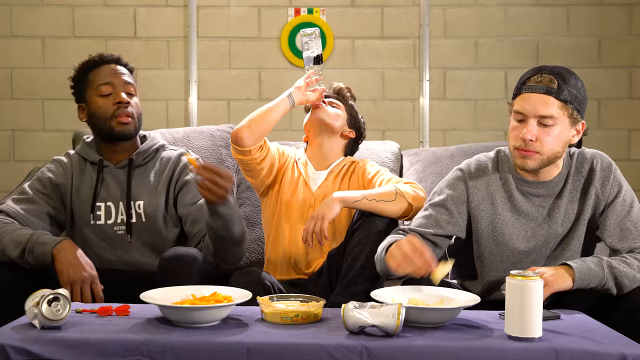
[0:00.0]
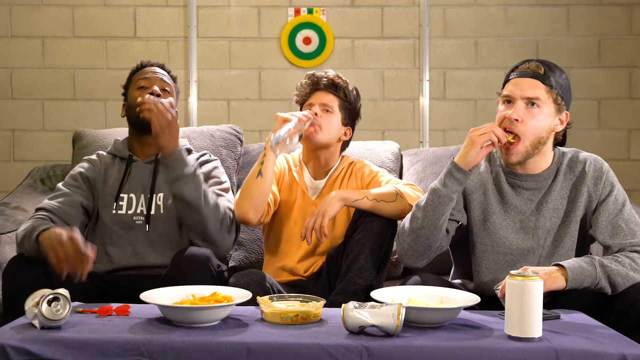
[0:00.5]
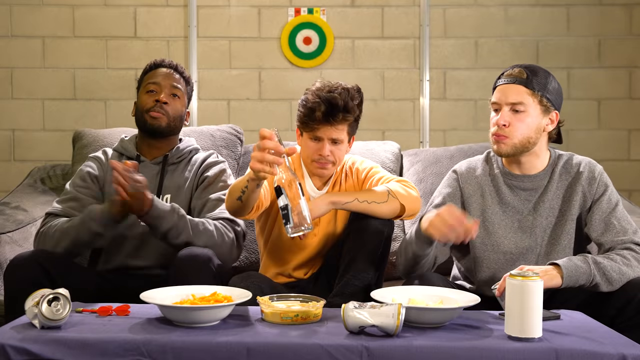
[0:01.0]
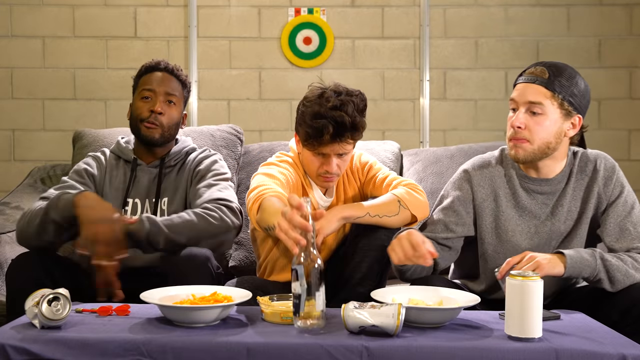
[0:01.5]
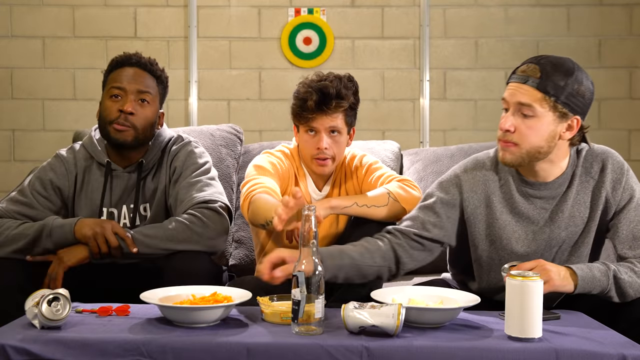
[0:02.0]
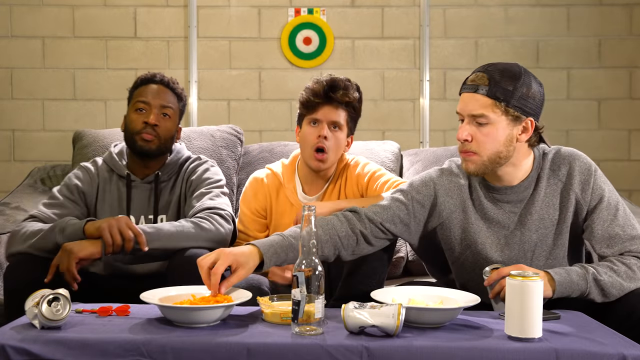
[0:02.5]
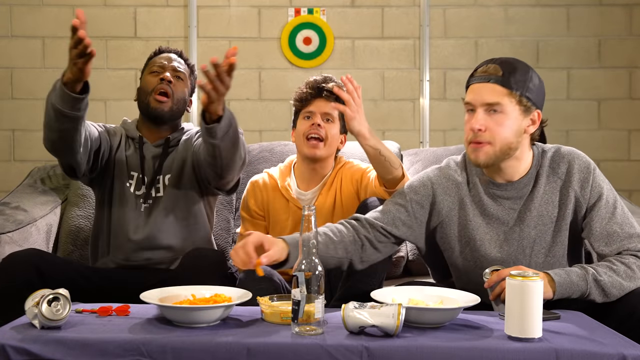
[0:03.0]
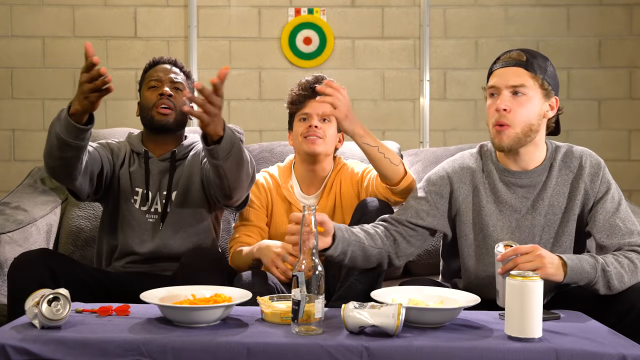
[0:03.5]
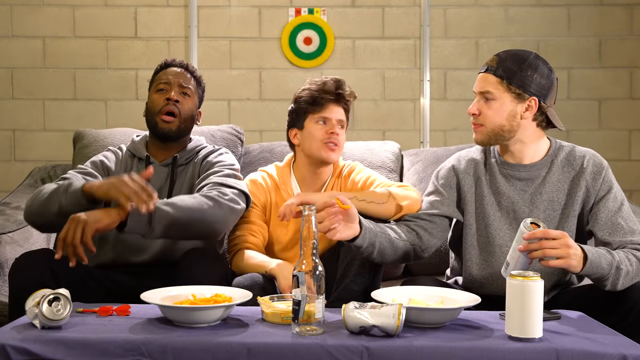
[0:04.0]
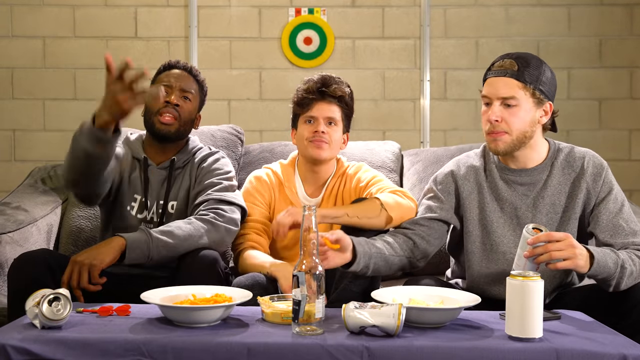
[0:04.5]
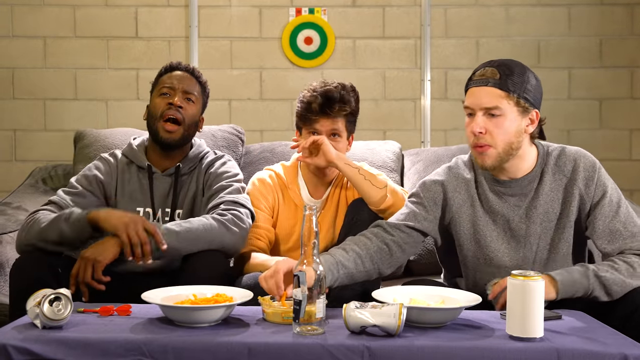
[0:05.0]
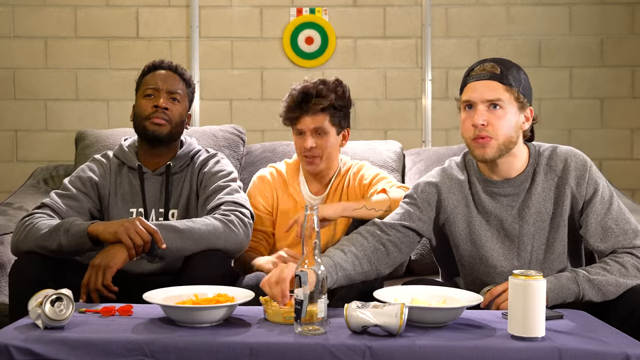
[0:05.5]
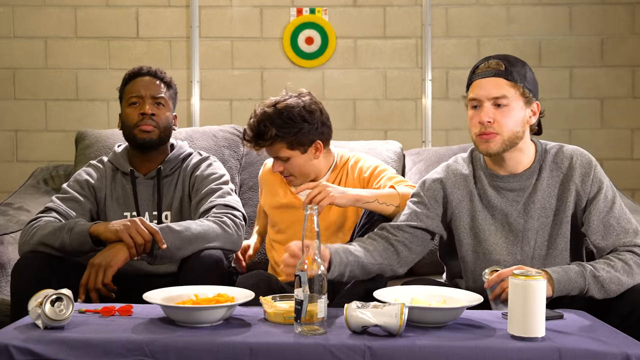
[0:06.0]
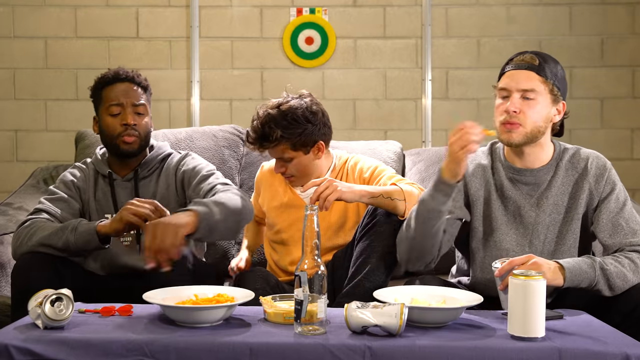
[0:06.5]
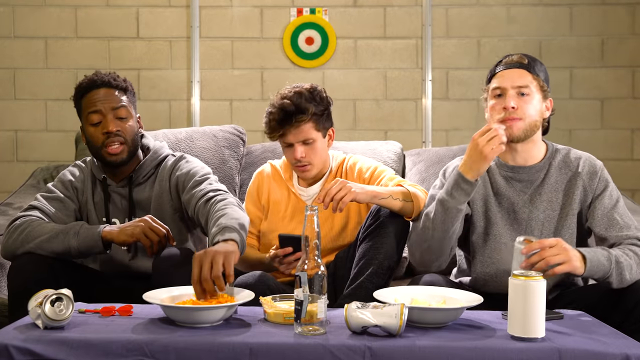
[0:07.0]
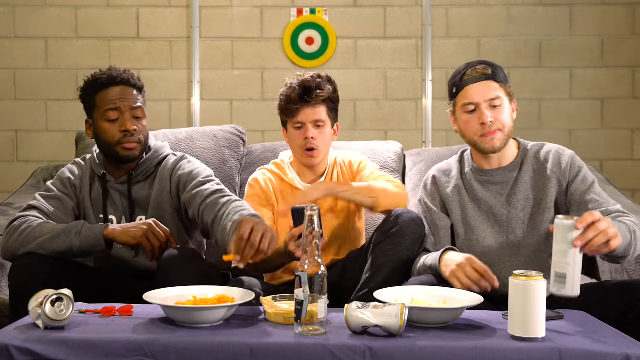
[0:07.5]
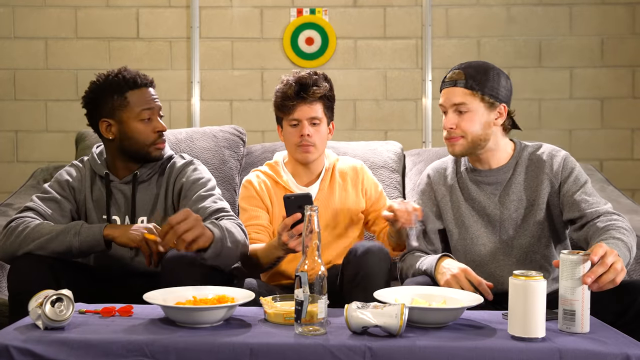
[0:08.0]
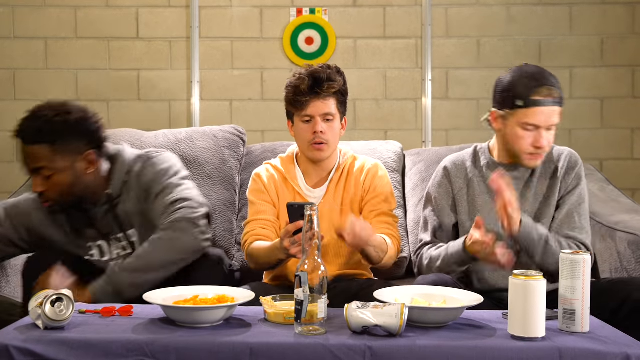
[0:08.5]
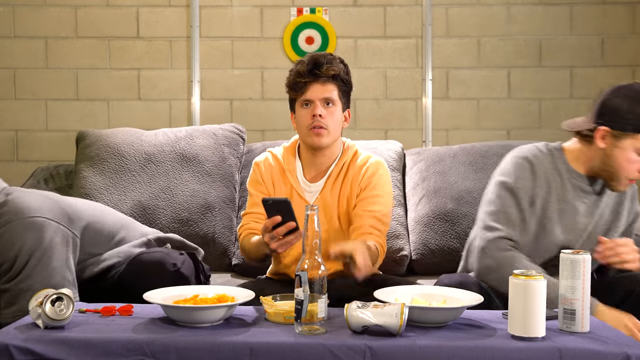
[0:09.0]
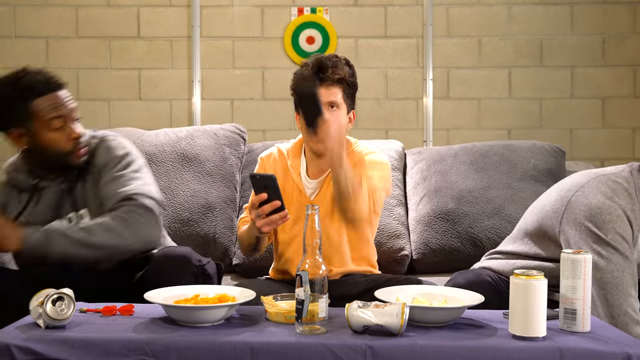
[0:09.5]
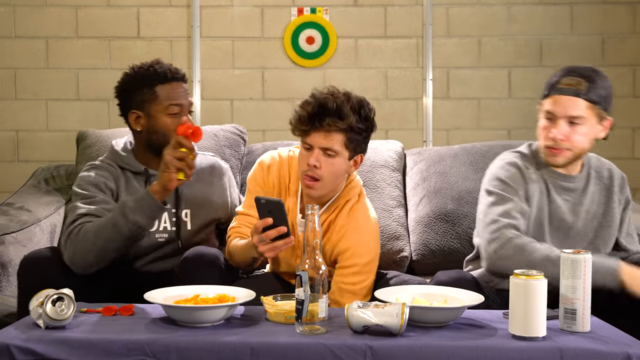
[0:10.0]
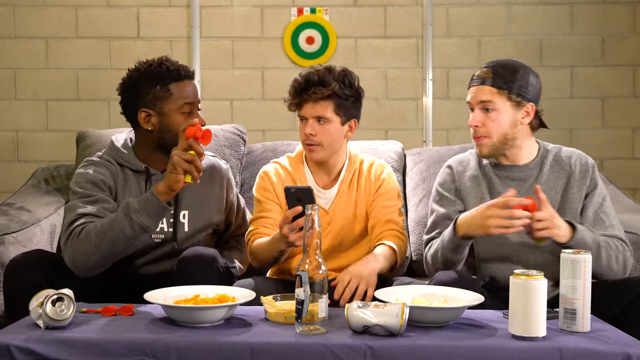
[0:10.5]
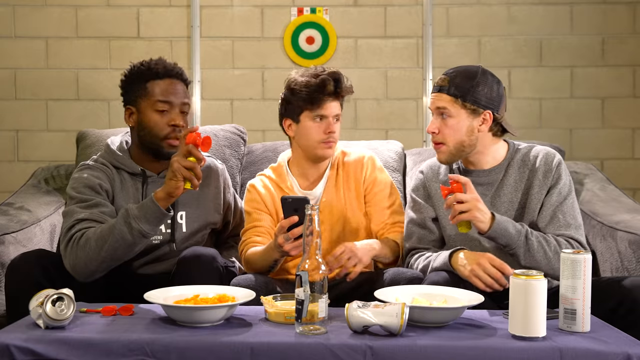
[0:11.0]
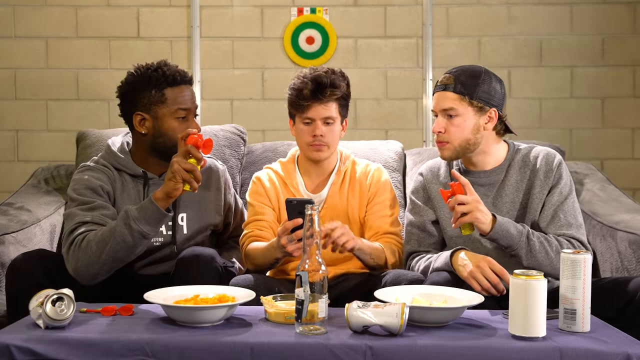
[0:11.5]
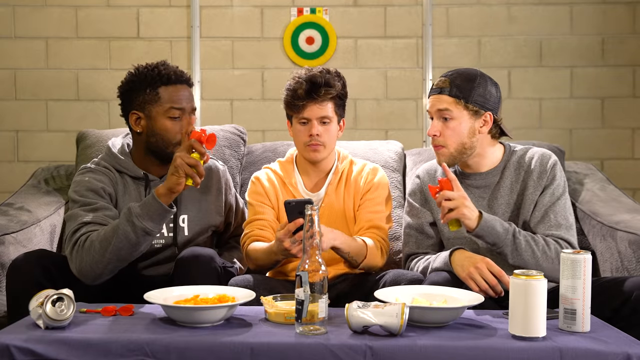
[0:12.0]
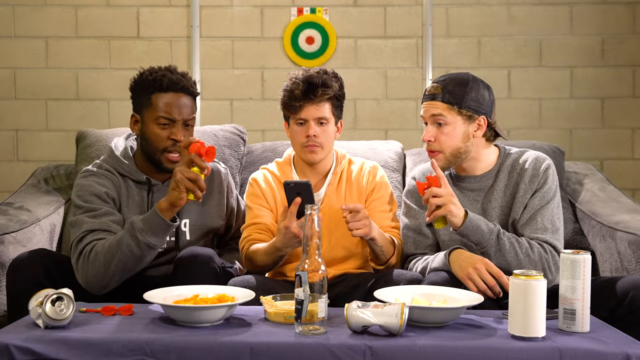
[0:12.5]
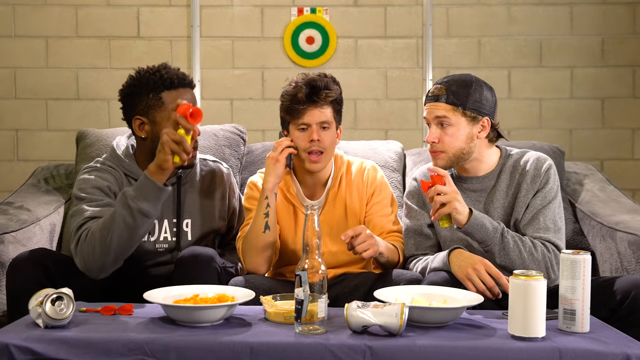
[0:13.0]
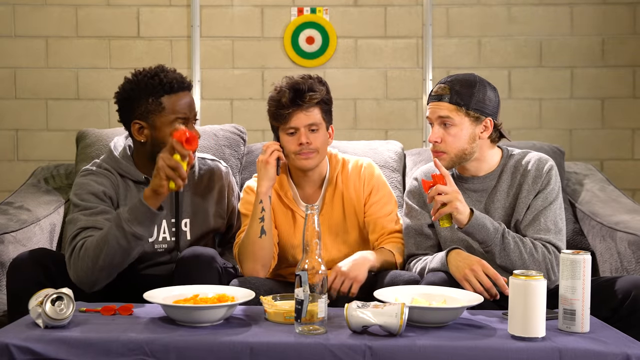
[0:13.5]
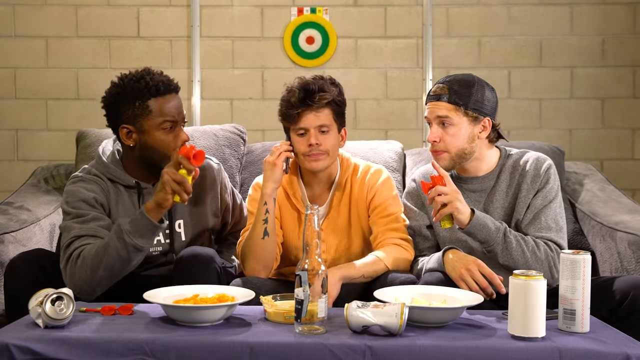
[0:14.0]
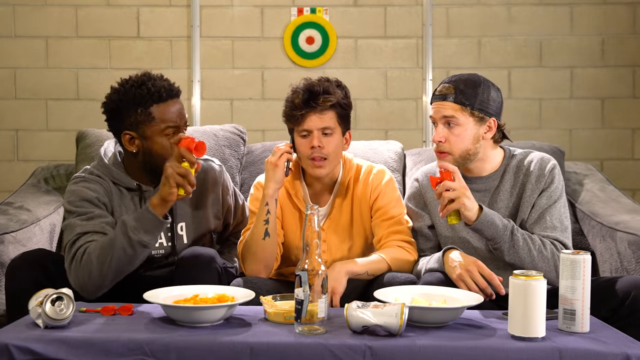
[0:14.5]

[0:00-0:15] The video opens on a shot directly in front of three men sitting on a gray couch, with a wall behind them; it looks like it could be some type of comedy show. The three men look about the same age, apparently in their early 20s, and the video is shot from this one angle. The man on the right wears a backwards black hat. They look like they might be watching TV of some sort, possibly a game. They eat chips out of large white bowls, and there are multiple cans, including crushed cans, on the table. Behind the head of the man in the middle is what looks like some type of design. The man in the middle drinks a beer, puts it down and answers a phone. When he answers, the two men on either side of him lean over to pick up what look like red air horns, and they appear to be getting ready to blast him with them.